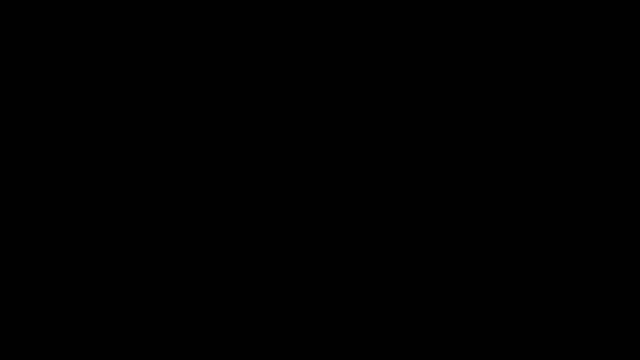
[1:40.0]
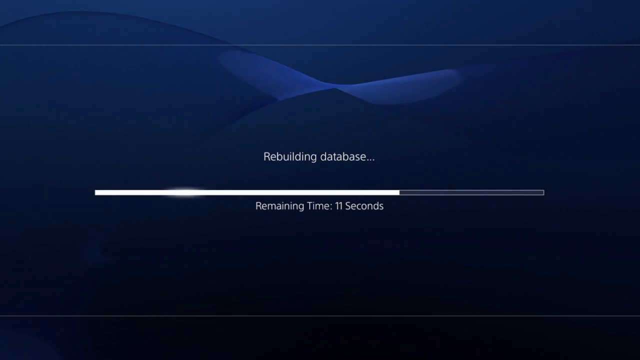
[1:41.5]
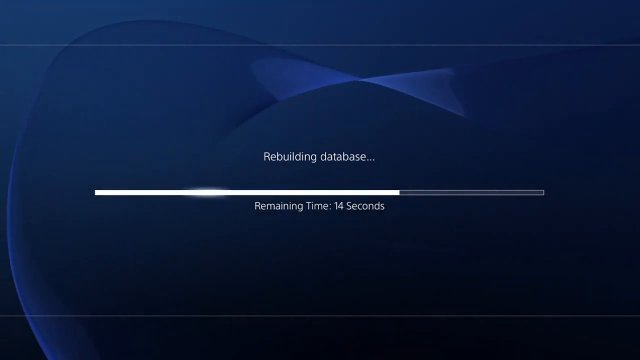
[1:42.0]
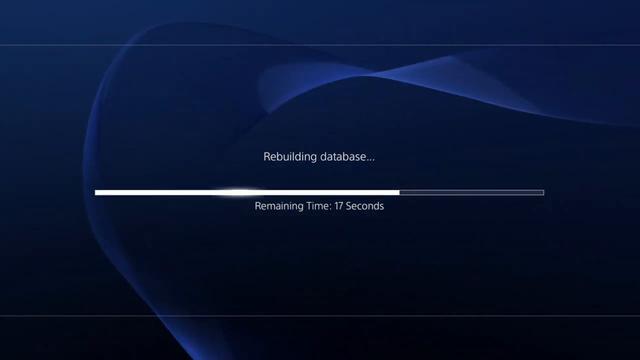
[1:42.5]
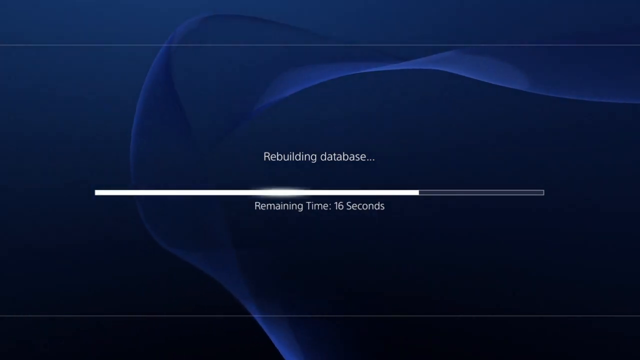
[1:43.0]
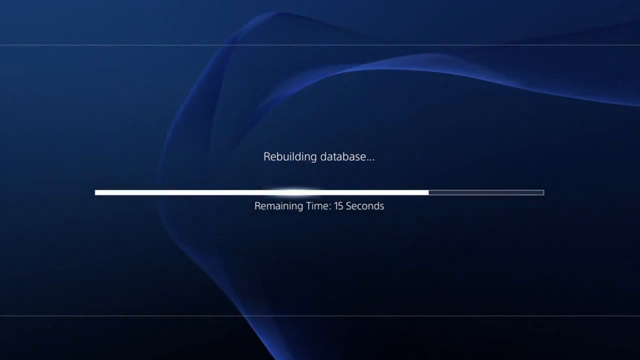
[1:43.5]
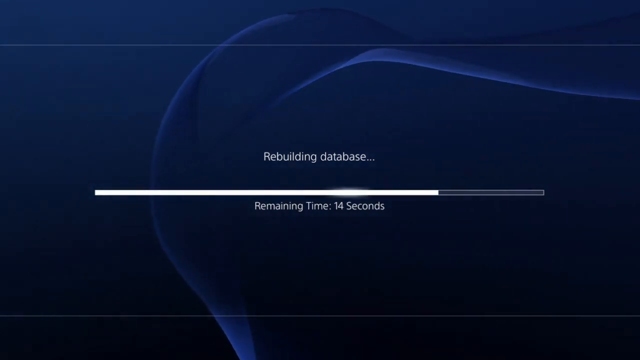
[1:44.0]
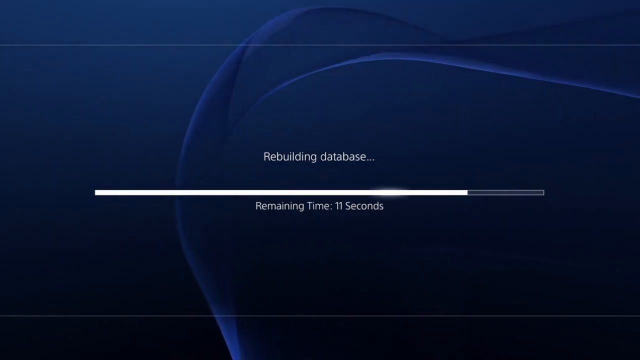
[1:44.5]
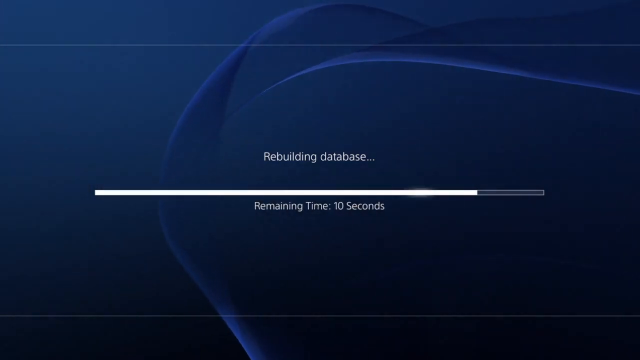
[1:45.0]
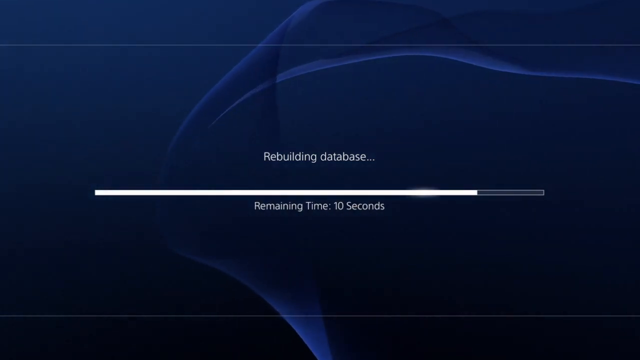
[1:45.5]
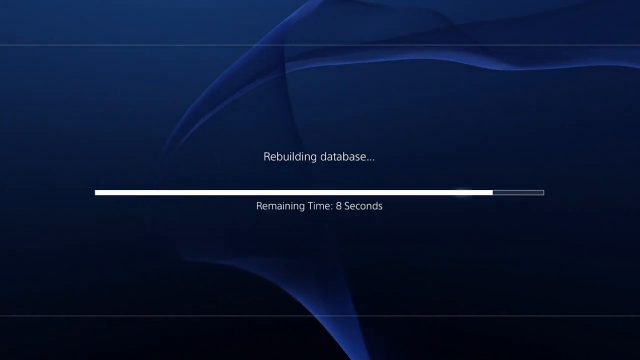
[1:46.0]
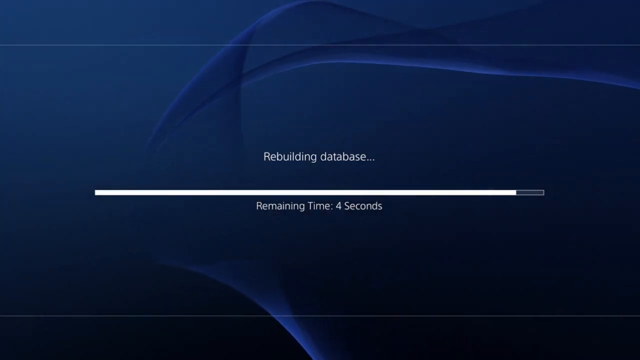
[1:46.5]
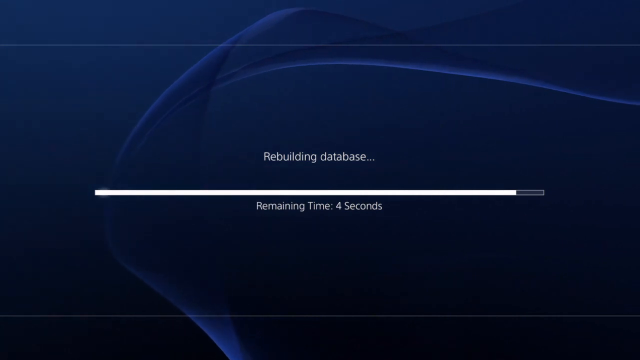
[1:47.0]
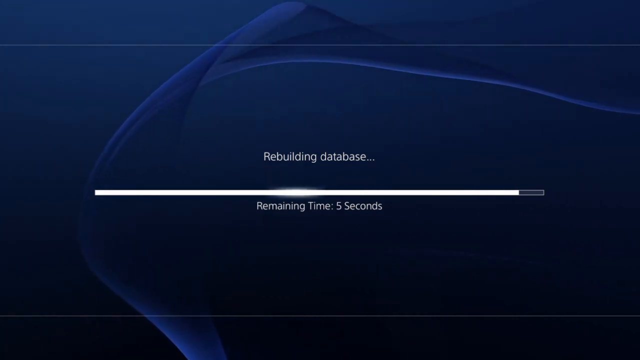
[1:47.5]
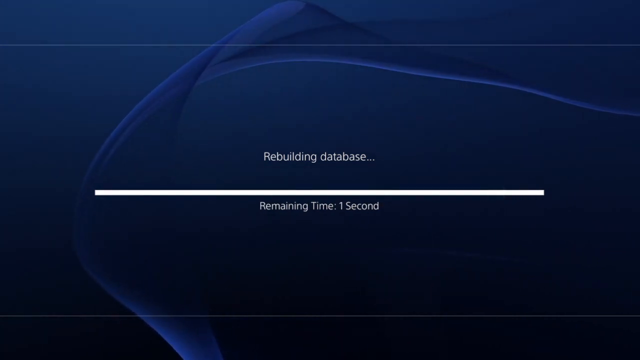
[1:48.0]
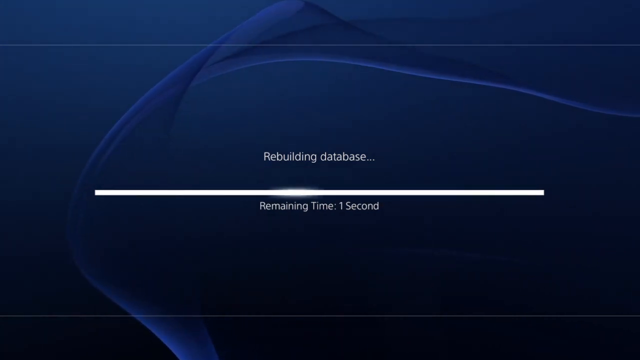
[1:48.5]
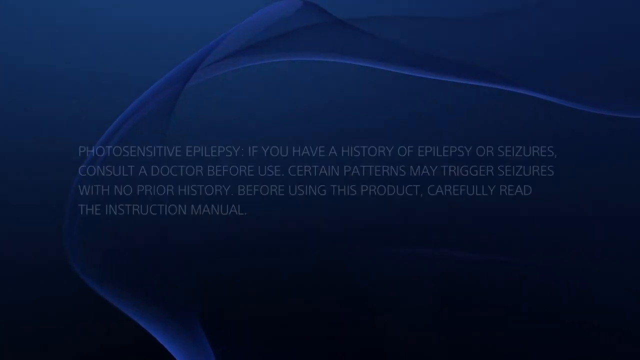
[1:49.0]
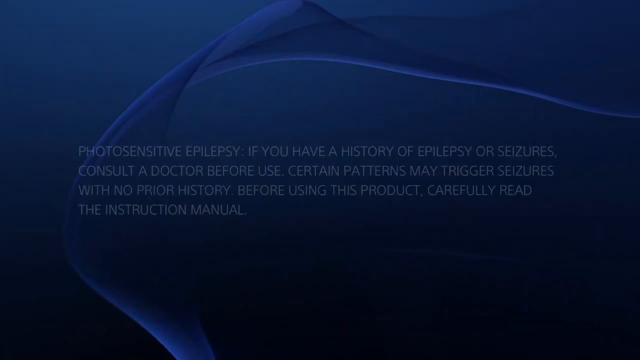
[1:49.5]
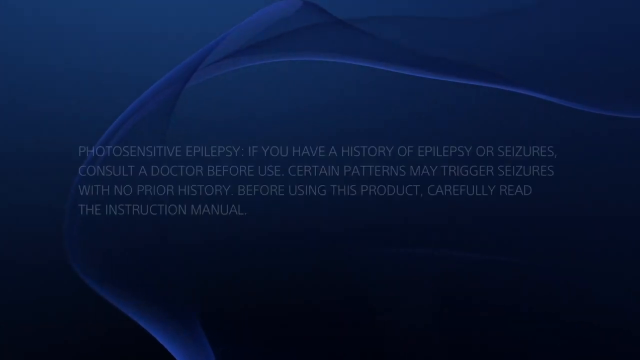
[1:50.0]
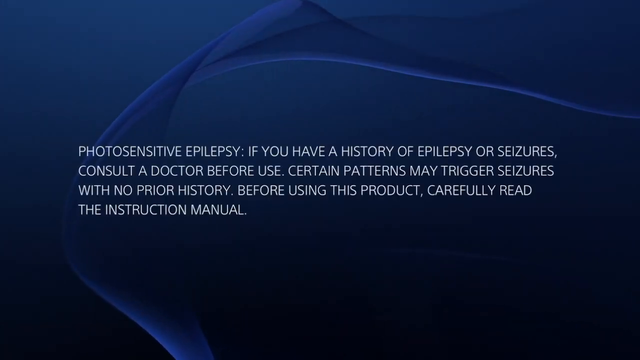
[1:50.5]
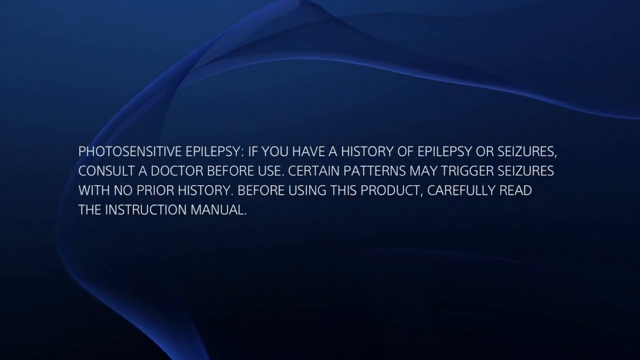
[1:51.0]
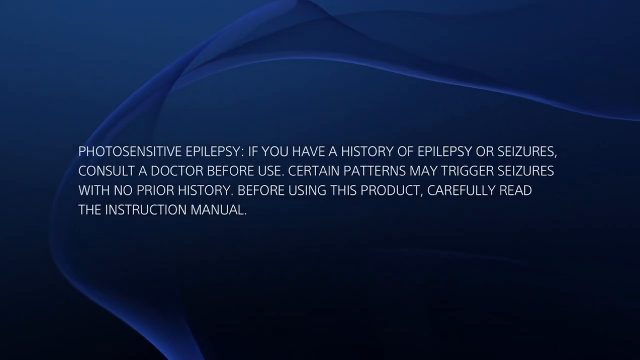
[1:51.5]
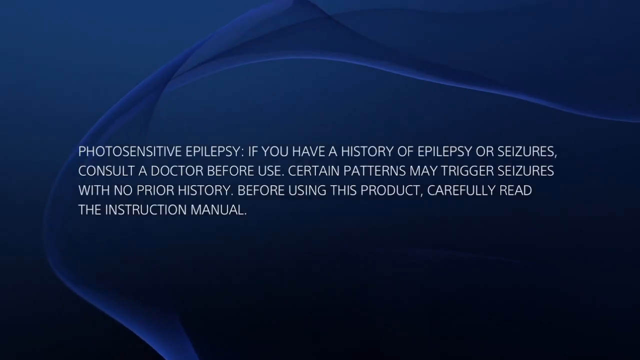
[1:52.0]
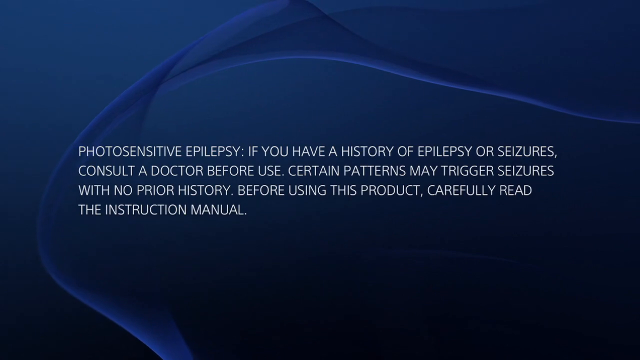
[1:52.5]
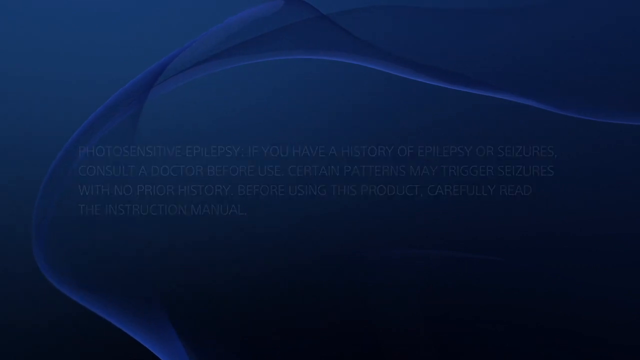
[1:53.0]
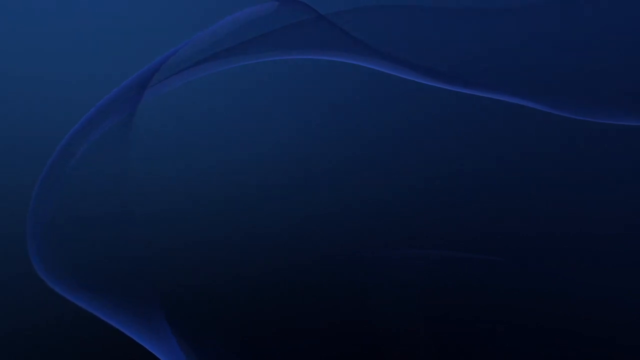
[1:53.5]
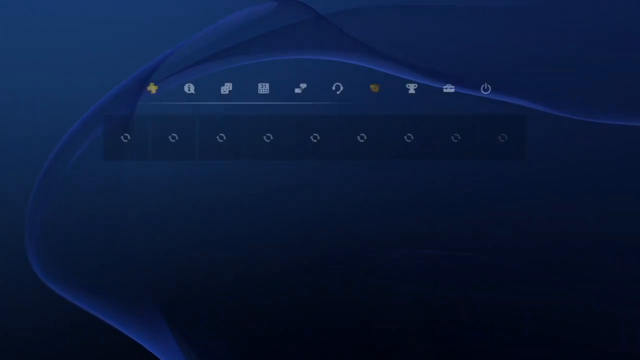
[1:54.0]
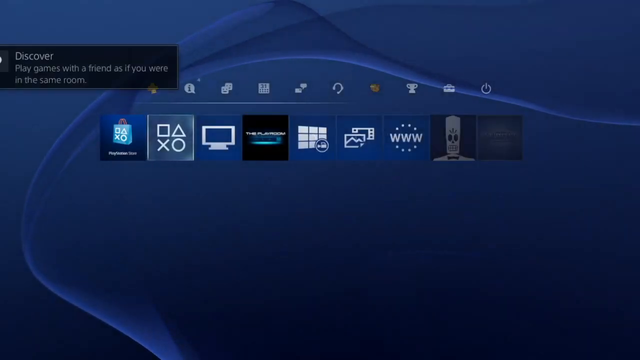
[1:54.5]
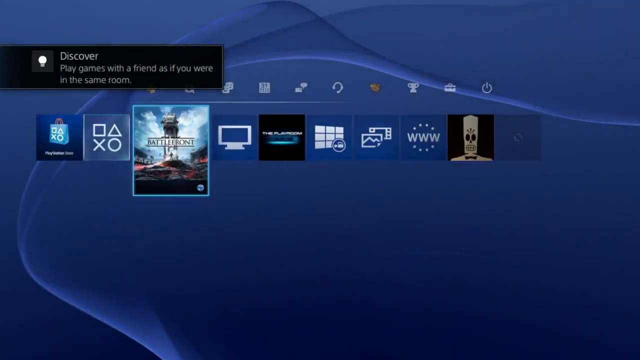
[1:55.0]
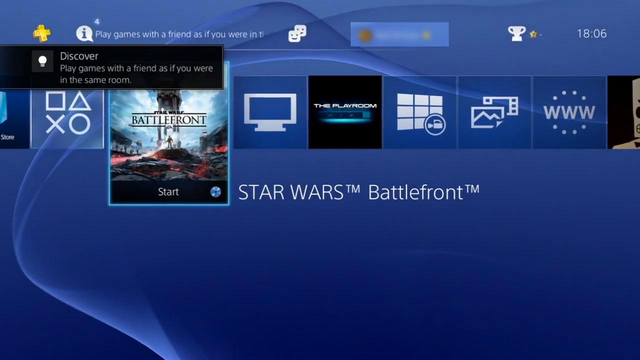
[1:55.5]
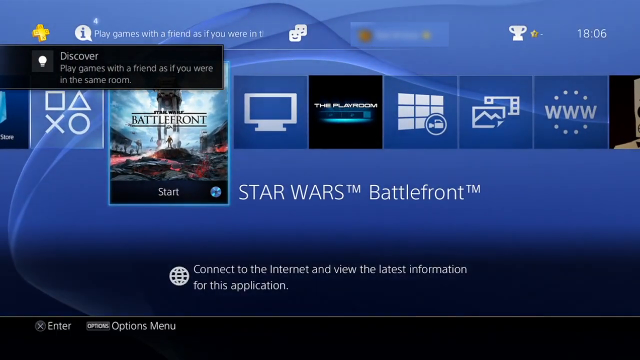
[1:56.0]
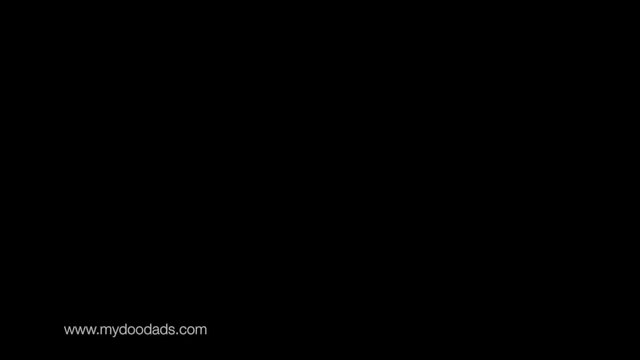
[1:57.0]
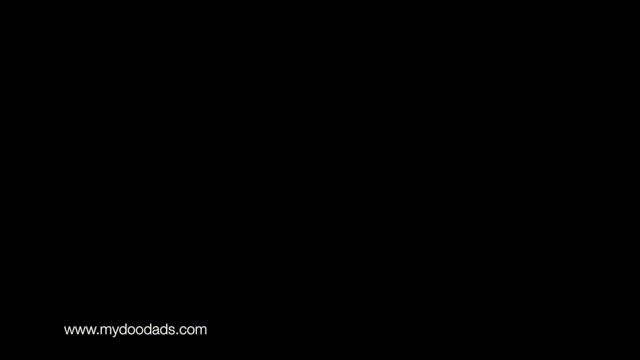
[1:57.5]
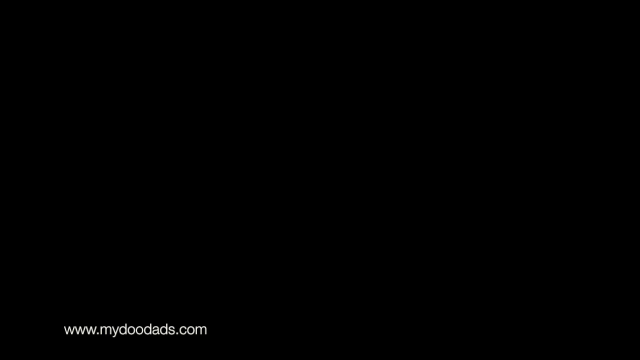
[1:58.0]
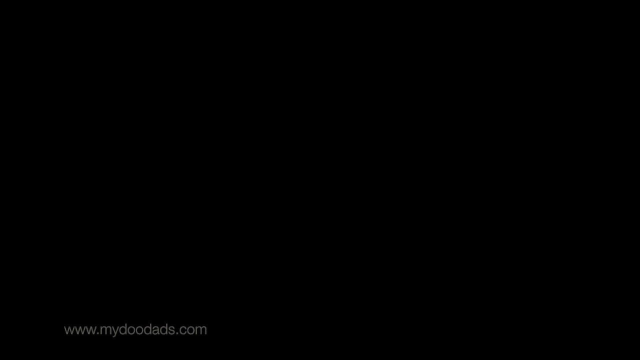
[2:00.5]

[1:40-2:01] The OK option is selected in baby blue, and a different idle screen appears with a bluish logo moving in a transverse wave pattern against a very deep blue background. White text reads "rebuilding database" above a status bar that is three quarters white, with the remaining quarter empty and blue. The remaining time shows 11 seconds, then a higher estimate of 14 seconds that ticks down to 10, 9, 6, 5 and then 1 second. A similar screen with the moving wave follows, showing a white-text warning about seizures that includes "Certain patterns may trigger seizures with no prior history" and advises to consult a doctor and to carefully read the instruction manual before using the product. Then what appears to be the game library and the PlayStation 4 main menu appear, showing Star Wars Battlefront.